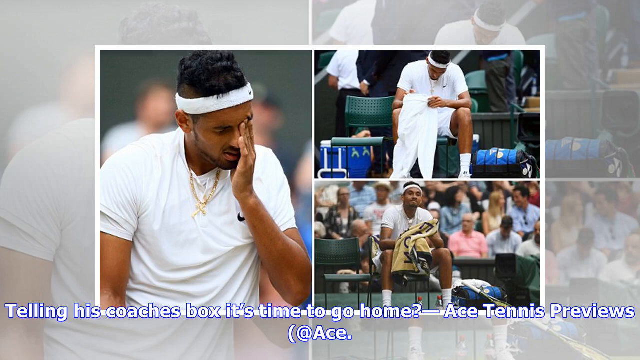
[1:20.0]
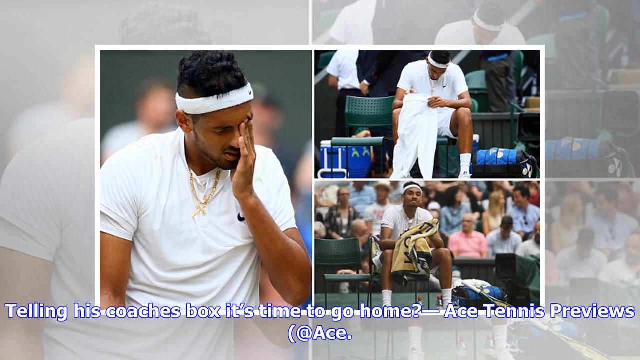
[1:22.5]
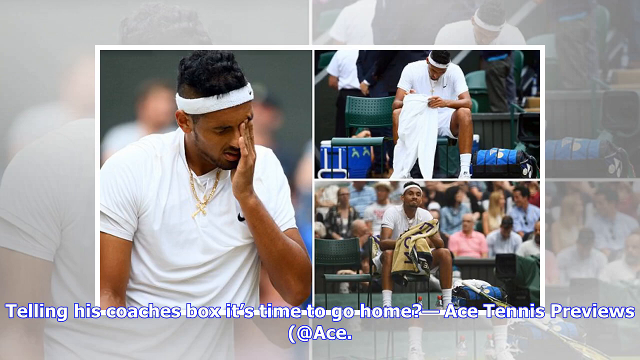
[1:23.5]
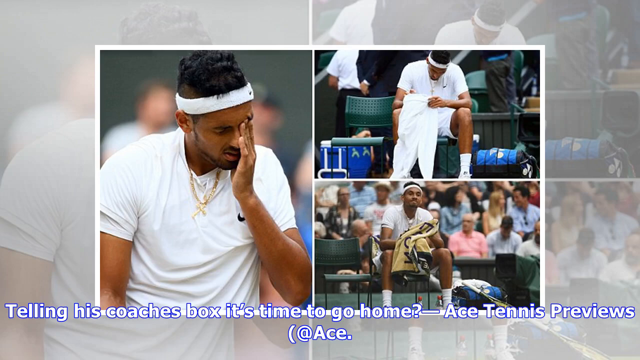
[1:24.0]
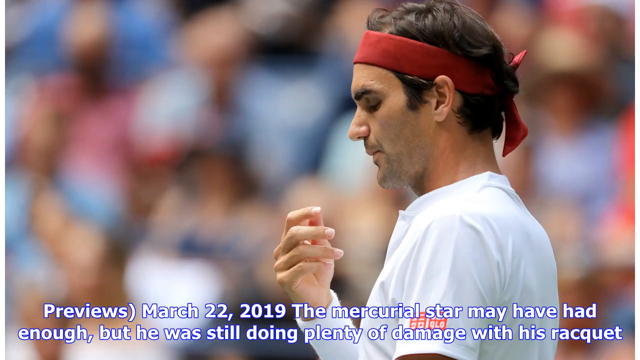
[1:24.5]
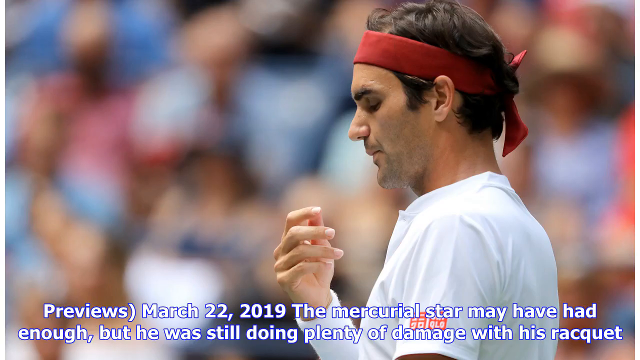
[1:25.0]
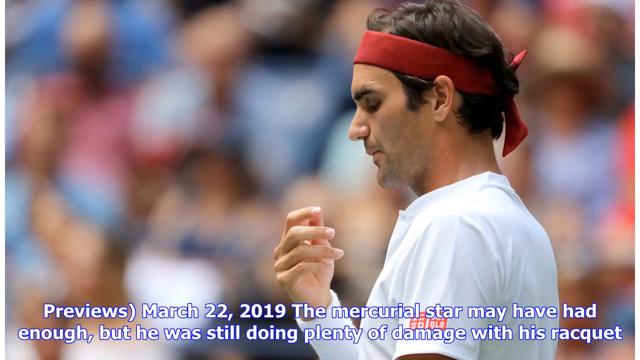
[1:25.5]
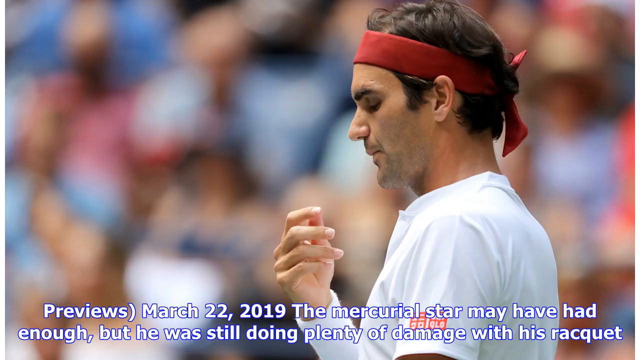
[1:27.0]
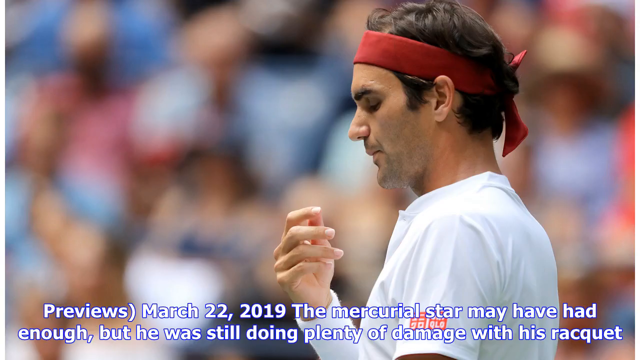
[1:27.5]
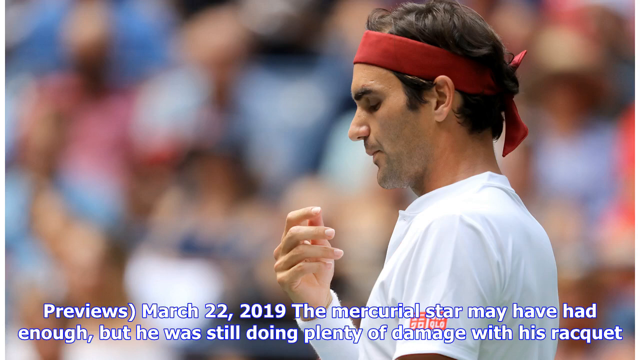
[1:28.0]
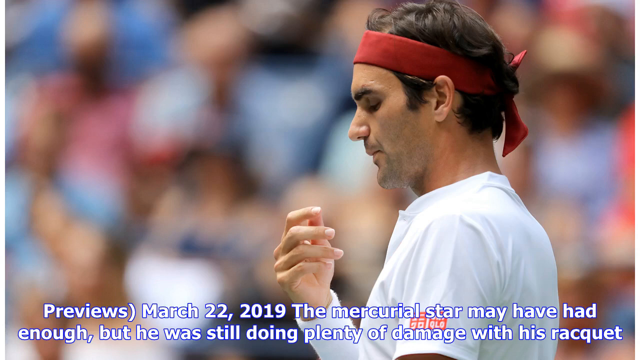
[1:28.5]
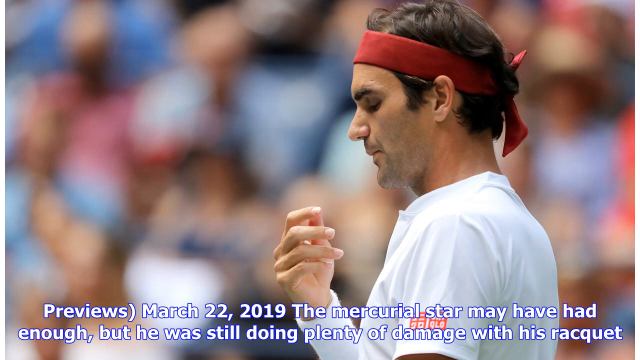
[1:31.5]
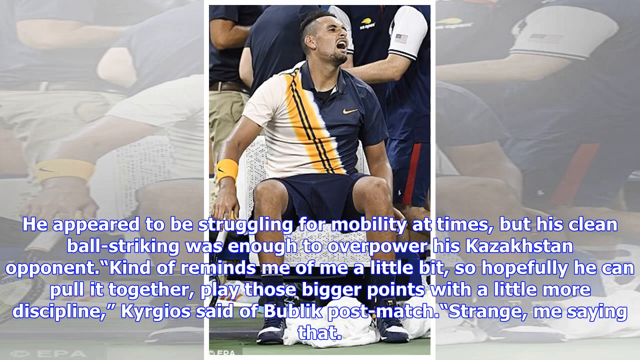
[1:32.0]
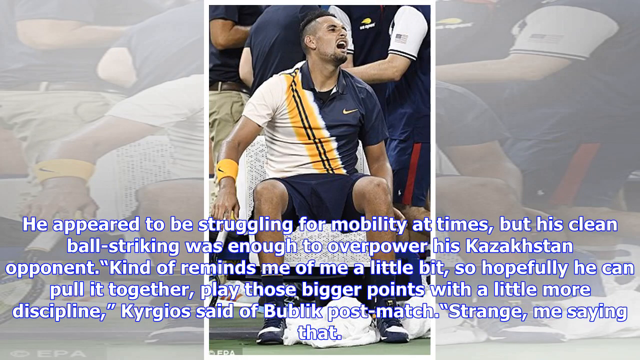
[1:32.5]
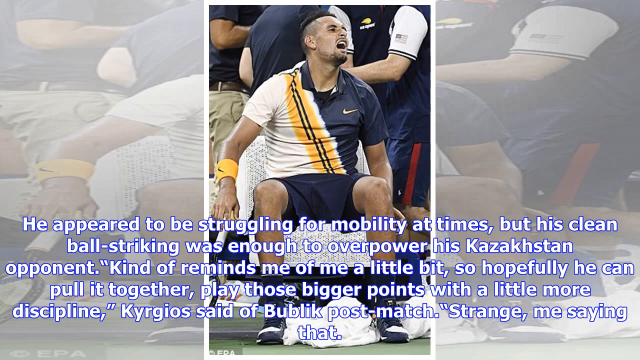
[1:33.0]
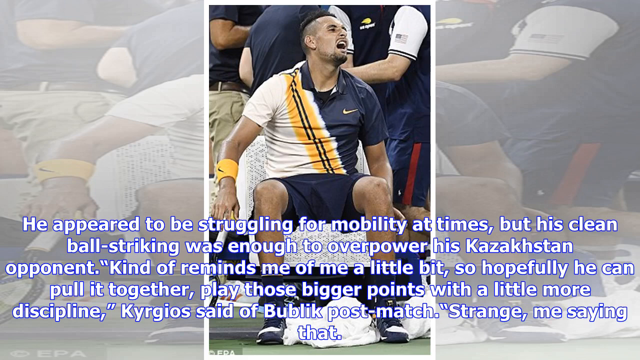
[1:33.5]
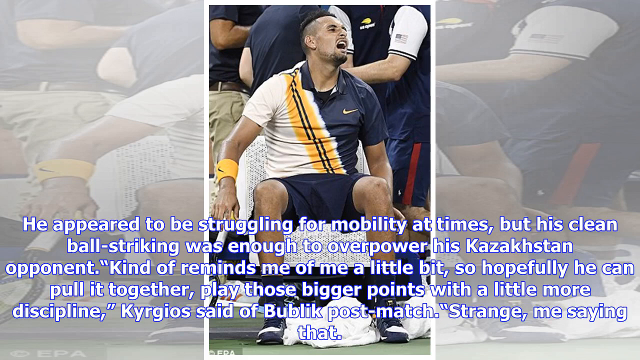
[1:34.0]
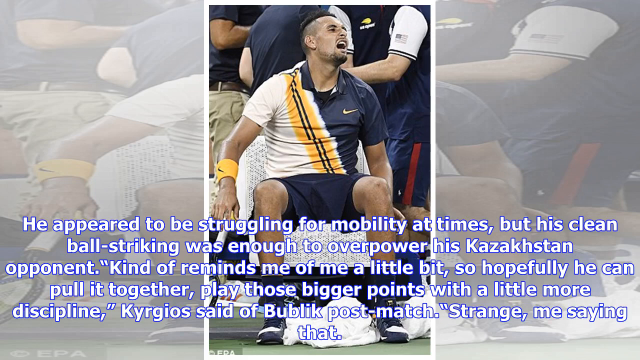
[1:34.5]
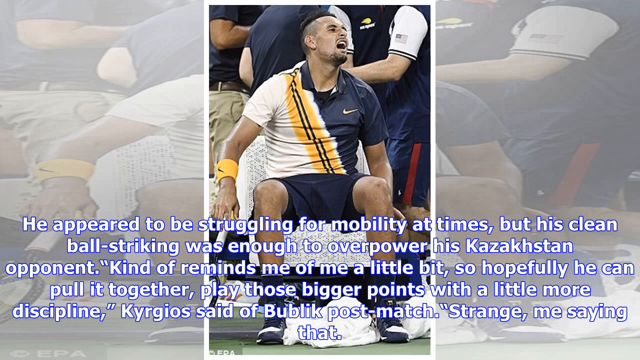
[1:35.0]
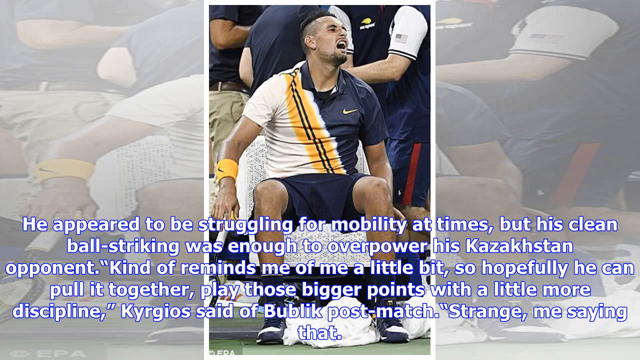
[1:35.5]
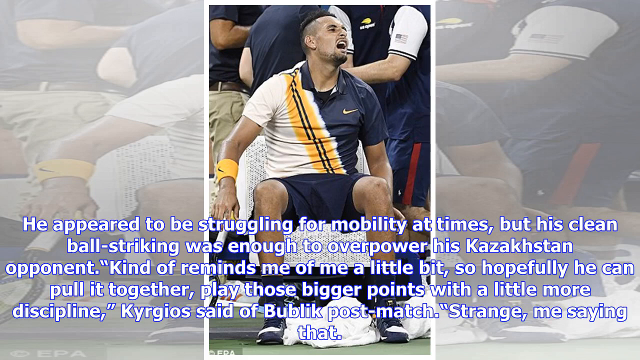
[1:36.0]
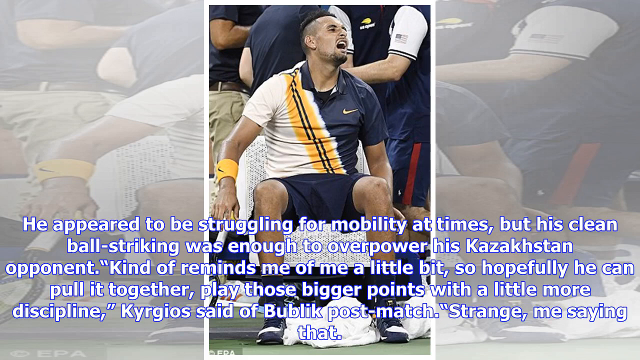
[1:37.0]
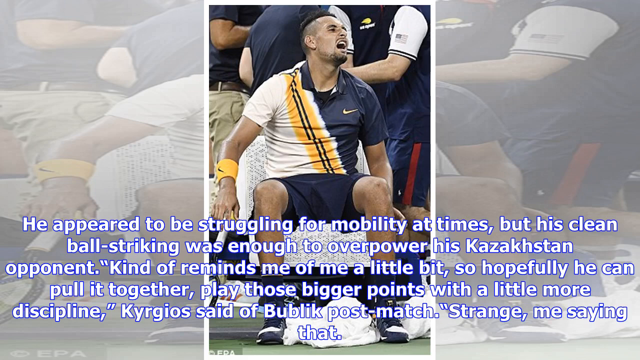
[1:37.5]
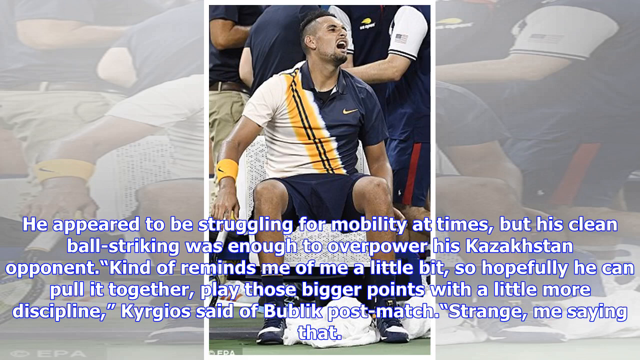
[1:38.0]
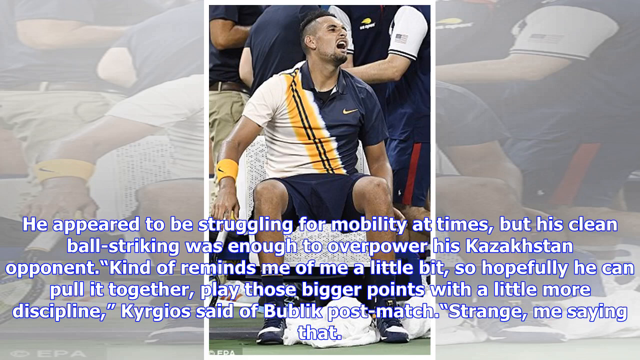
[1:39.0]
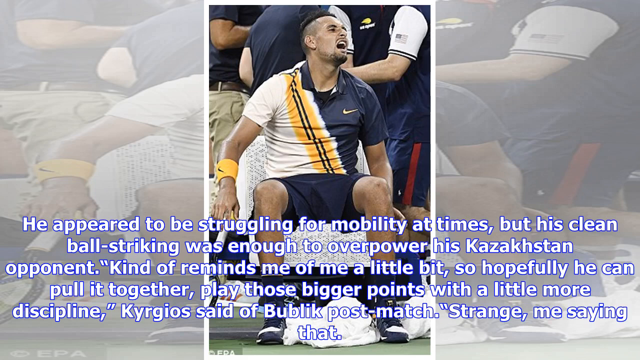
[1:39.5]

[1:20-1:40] A photo of Kyrgios is followed straight away by the same picture of Federer seen earlier. The sequence is a picture of Kyrgios during the break with his towel, then Roger Federer, then the picture of Kyrgios in his blue, orange and white shirt shouting in his chair during a break. Text underneath says he appears to be struggling for mobility at times, "but his clean ball striking was enough to overpower his Kazakhstan opponent," and continues "Kind of reminds me of him a little bit, so hopefully you can put it together."